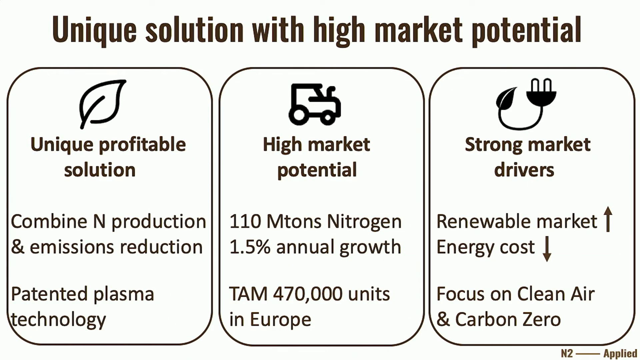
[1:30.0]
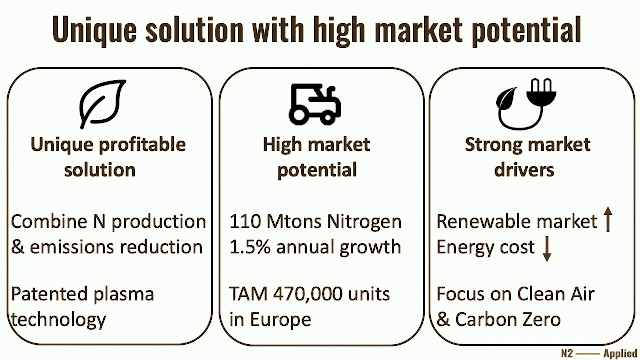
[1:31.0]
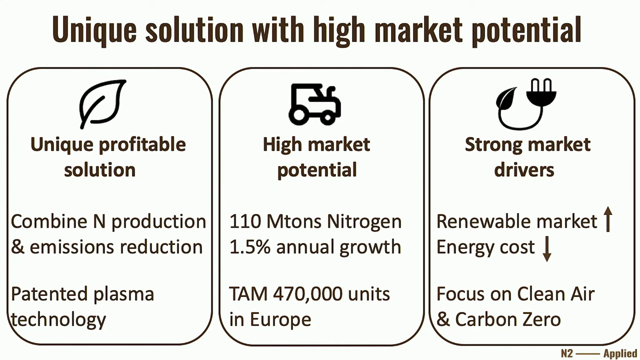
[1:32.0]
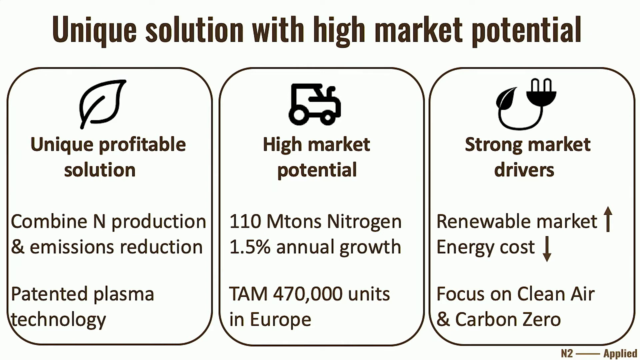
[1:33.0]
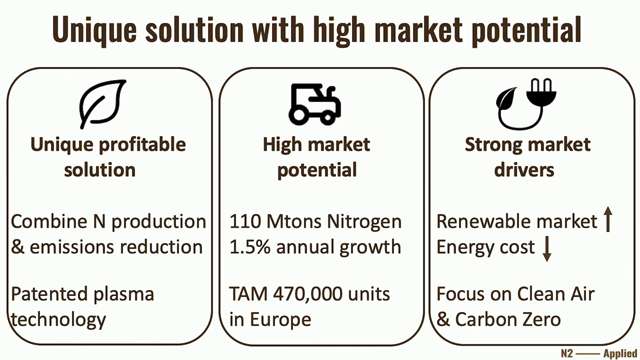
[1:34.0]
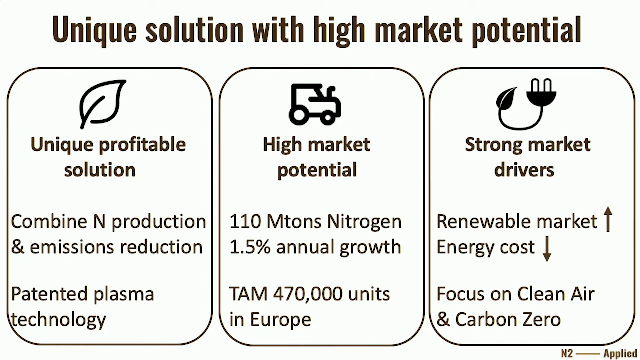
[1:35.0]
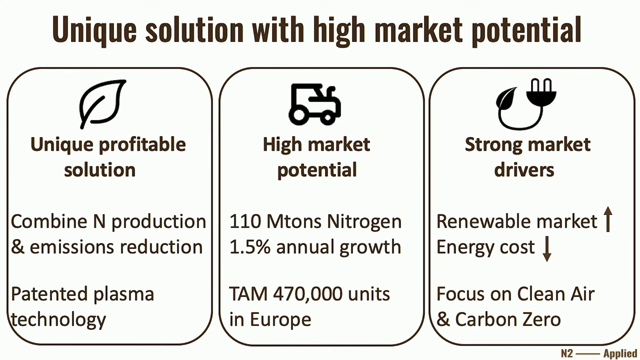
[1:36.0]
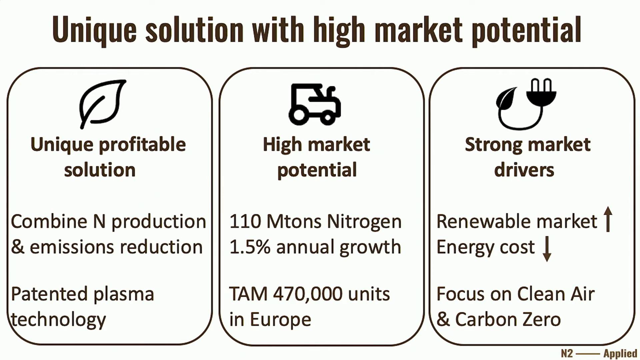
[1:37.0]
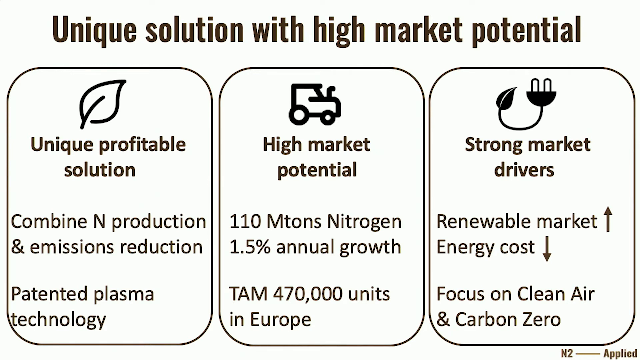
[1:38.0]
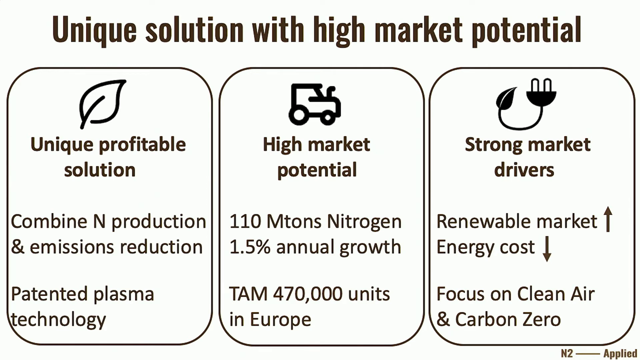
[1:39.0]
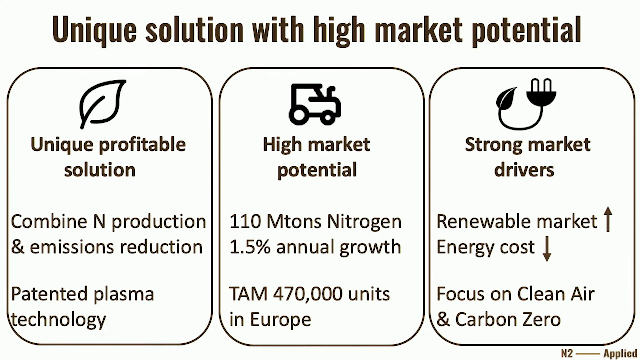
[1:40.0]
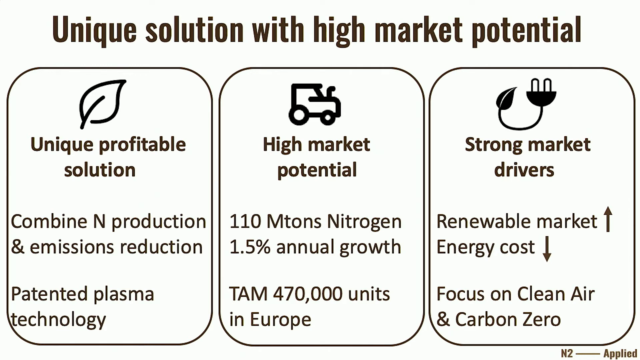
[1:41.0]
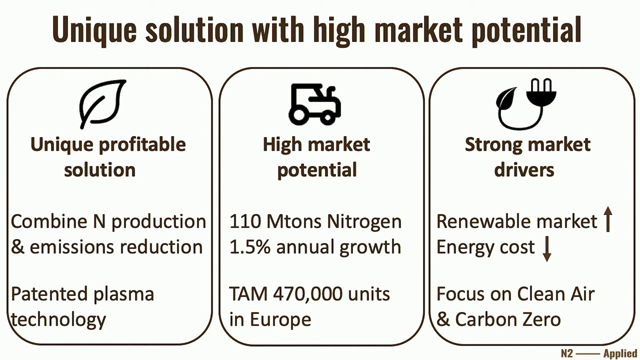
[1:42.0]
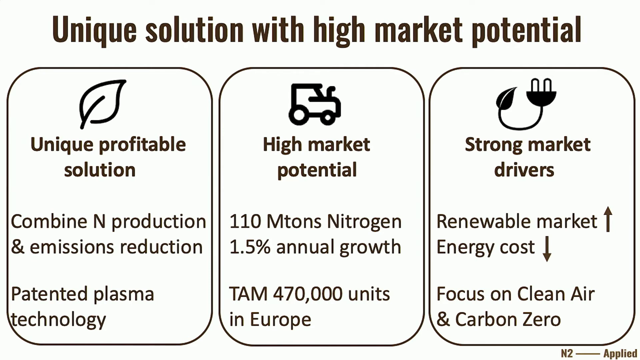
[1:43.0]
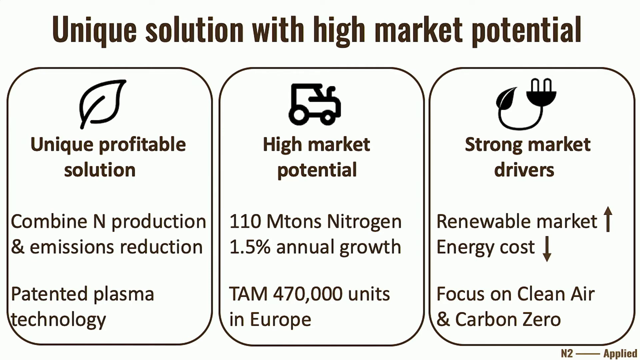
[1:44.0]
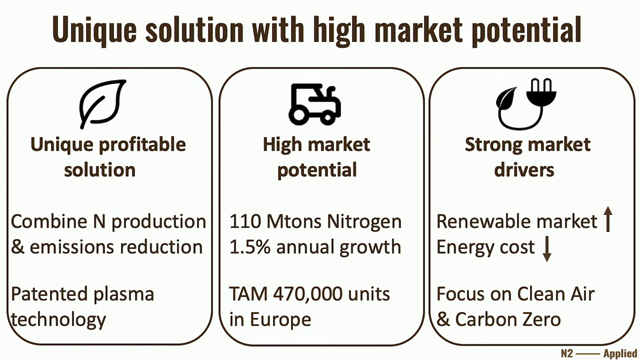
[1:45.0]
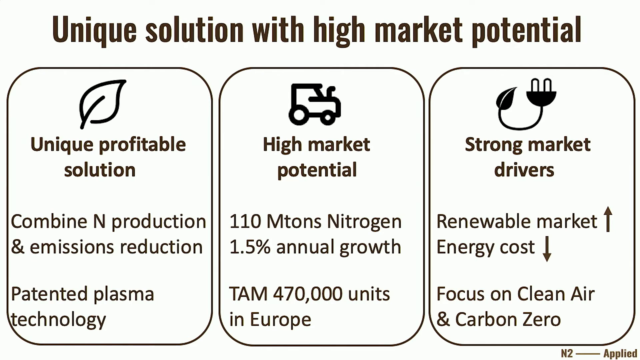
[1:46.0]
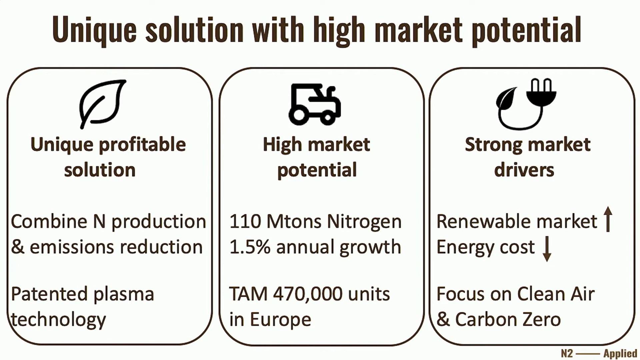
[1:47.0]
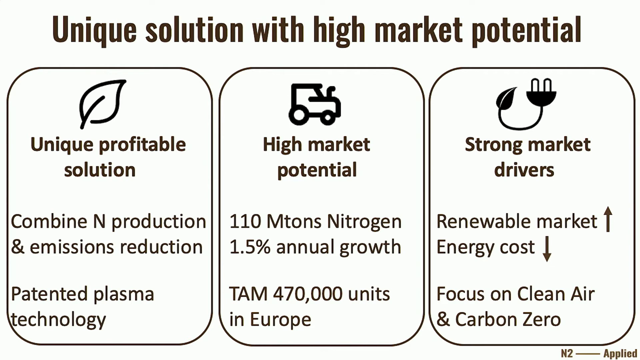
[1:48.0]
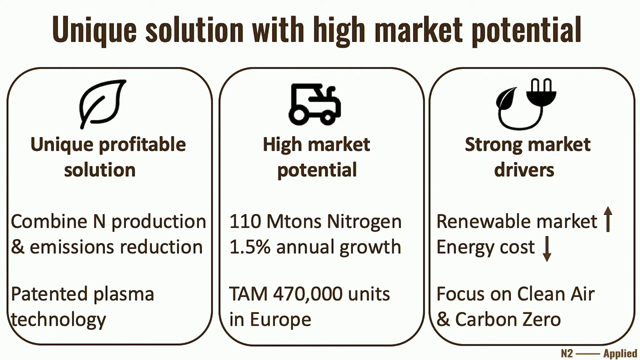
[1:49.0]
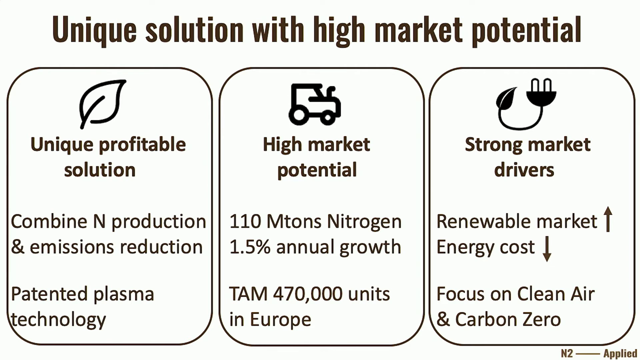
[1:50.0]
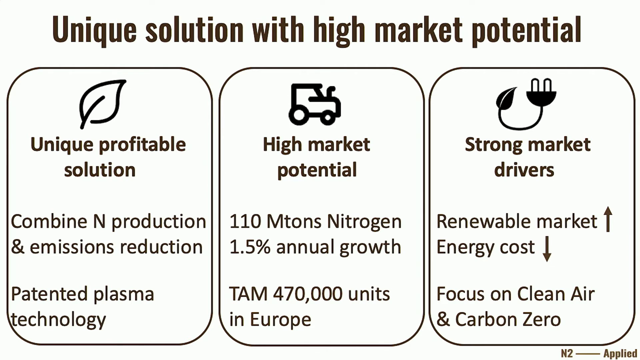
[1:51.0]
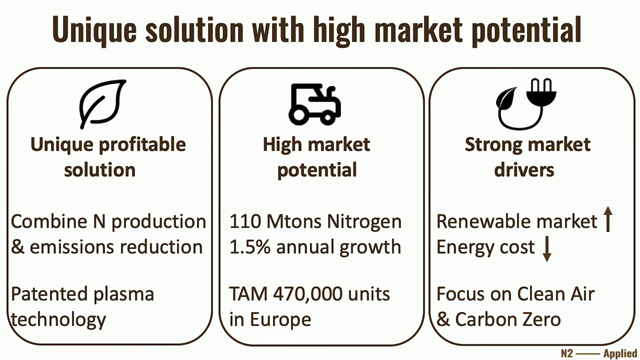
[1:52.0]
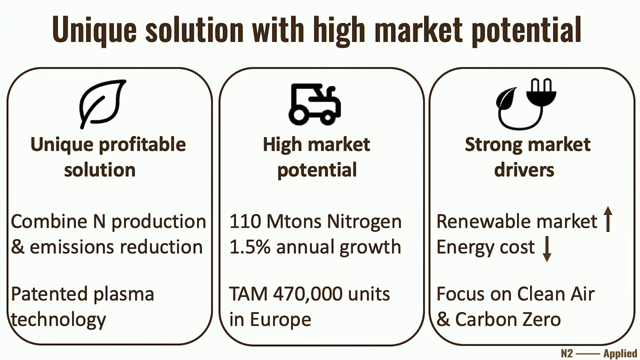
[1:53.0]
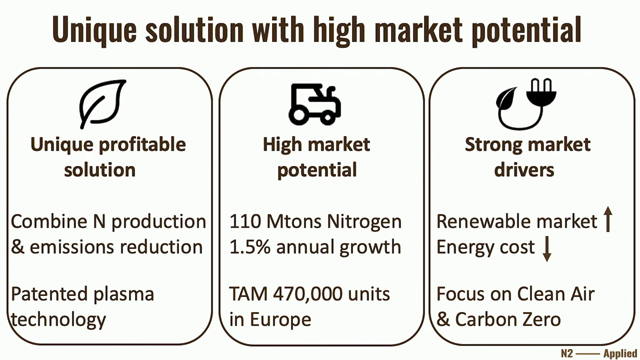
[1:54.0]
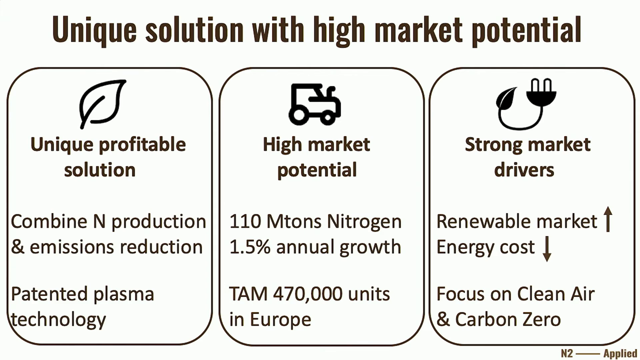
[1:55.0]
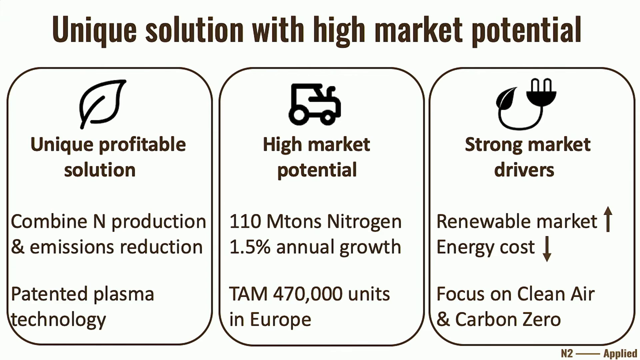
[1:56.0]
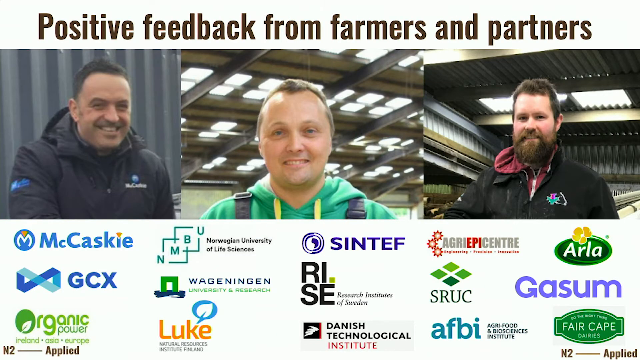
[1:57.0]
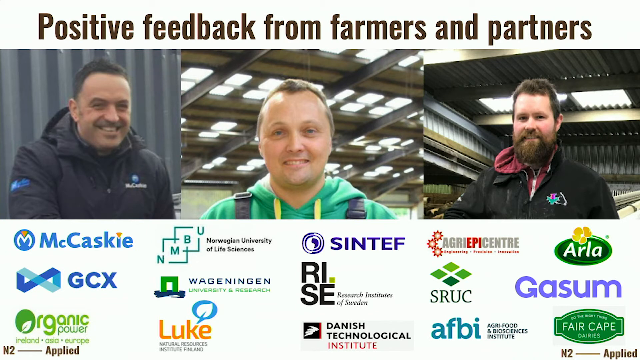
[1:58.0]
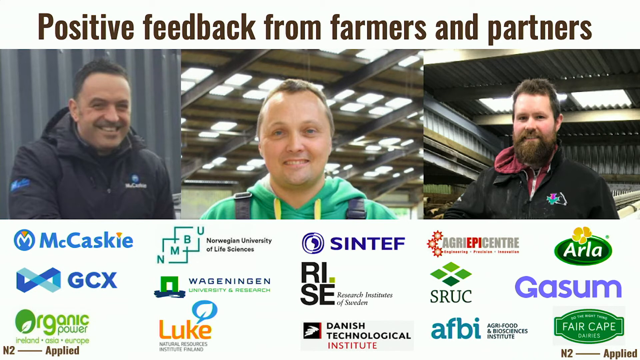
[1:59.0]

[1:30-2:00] A solid white background holds three outlined rectangular shapes. At the top, bold black text reads "unique solution with high market potential". In the left section is a leaf icon with "unique profitable solution" and "combined end production and emissions reduction". To the right is "high market potential" with an icon of a tractor, and below it "110 m tons nitrogen", "1.5% annual growth", and "TAM 470,000 units in Europe". On the right is "strong market drivers", with an upward arrow for renewable market and a downward arrow for energy cost, and below it "focus on clean air and carbon zero". The video then switches to a new page with images of three men, left to right. The first is a Caucasian man with dark hair and a dark jacket; below him are the words McCaskie and GCX with their company logos. Next is a Caucasian man, perhaps in his late 30s, in a green hoodie, seen from the shoulders up; below him are Norwegian University of Life Sciences, Sintef, and a company called Rise. Last is another Caucasian man with a dark beard and hair, with the companies Arla, Gassam, and SRUC below him.